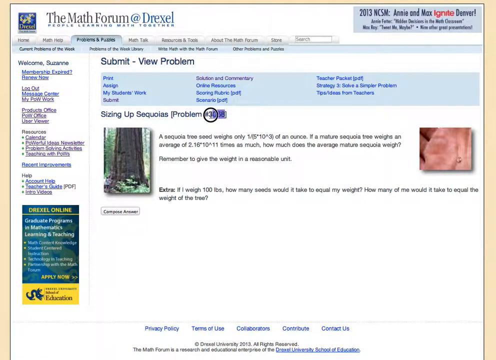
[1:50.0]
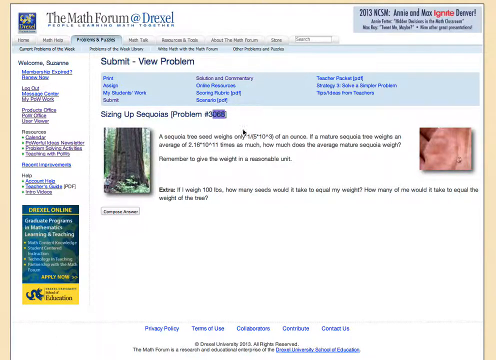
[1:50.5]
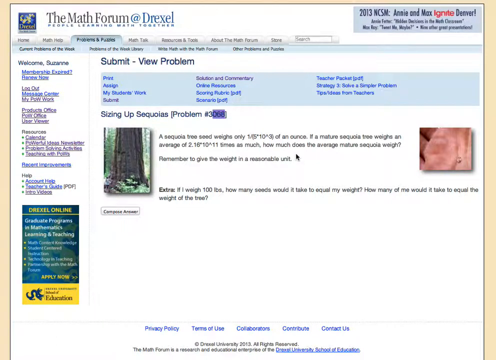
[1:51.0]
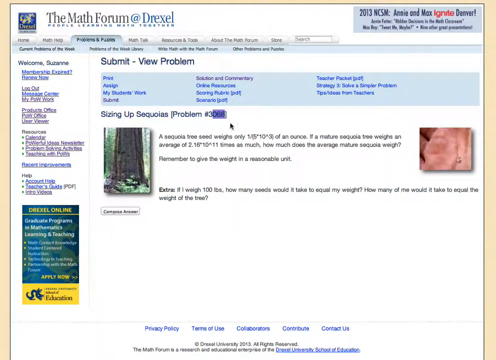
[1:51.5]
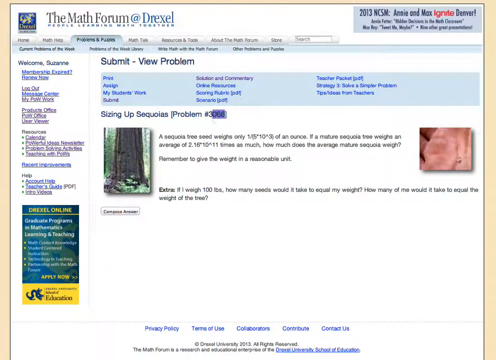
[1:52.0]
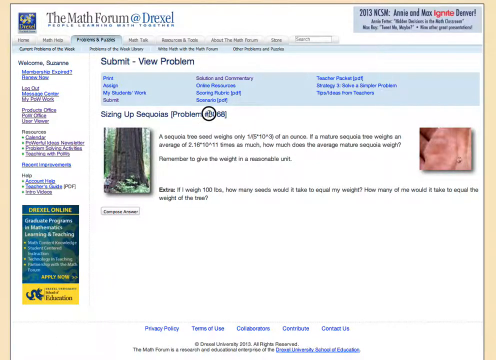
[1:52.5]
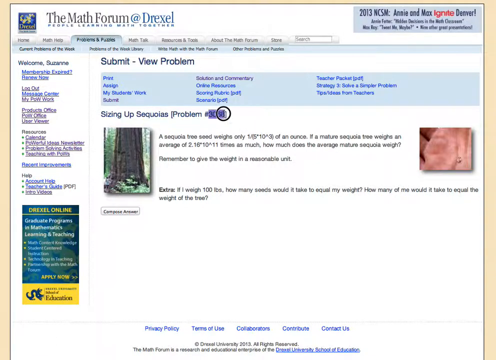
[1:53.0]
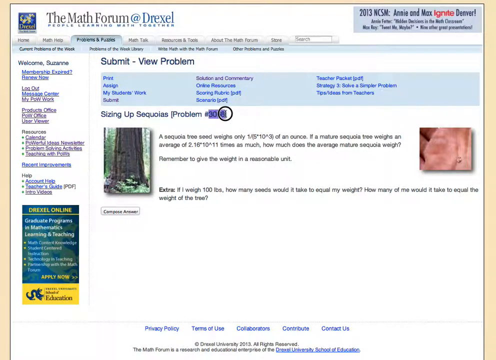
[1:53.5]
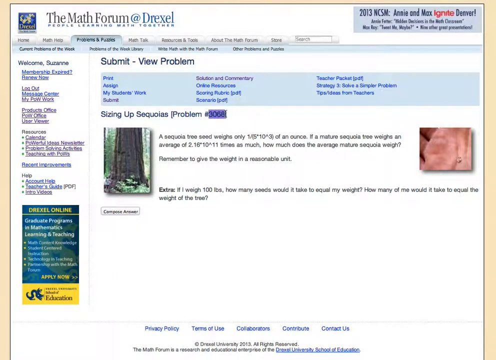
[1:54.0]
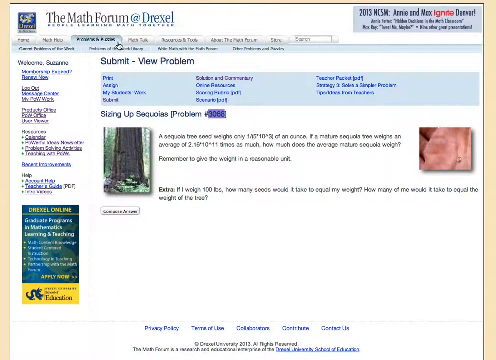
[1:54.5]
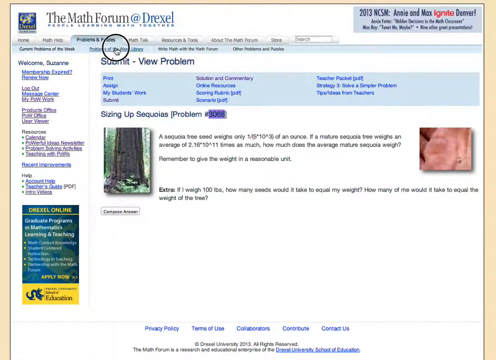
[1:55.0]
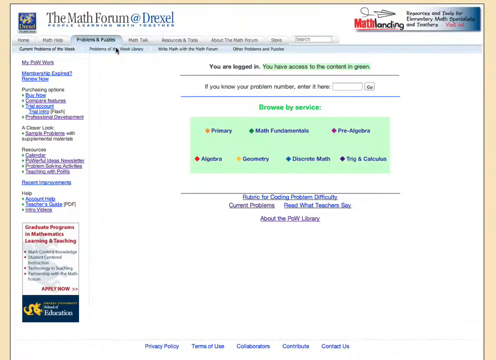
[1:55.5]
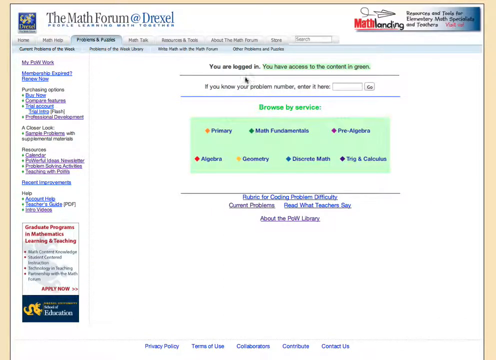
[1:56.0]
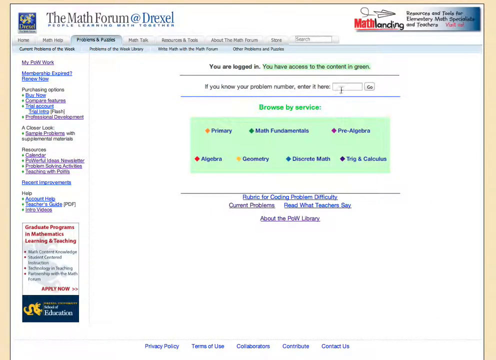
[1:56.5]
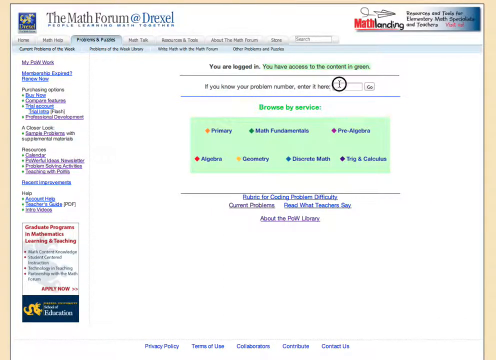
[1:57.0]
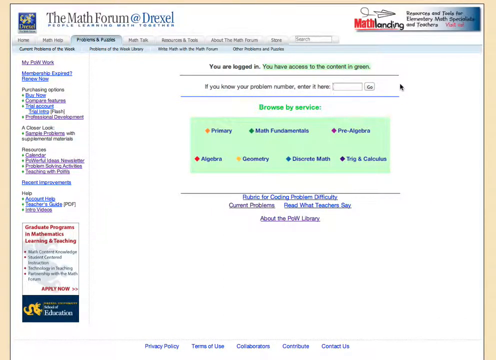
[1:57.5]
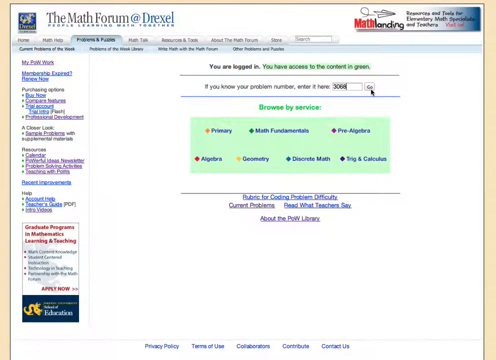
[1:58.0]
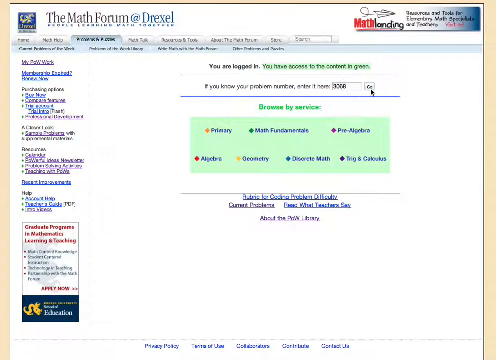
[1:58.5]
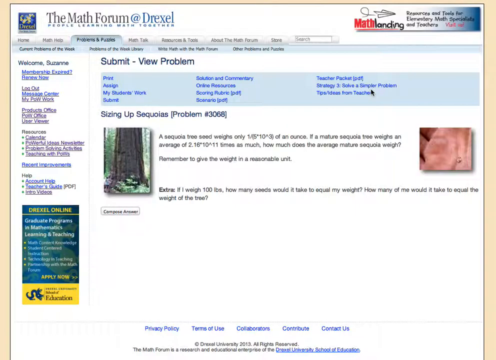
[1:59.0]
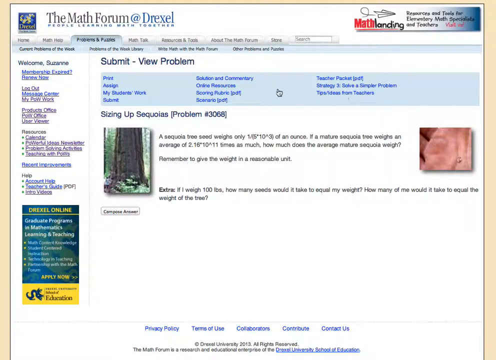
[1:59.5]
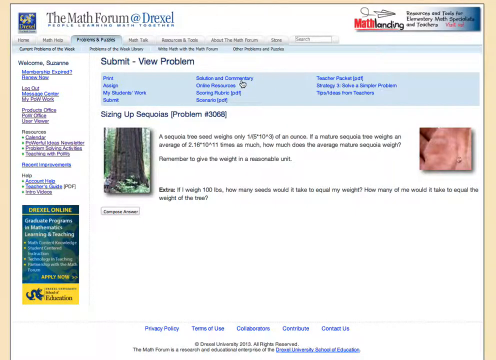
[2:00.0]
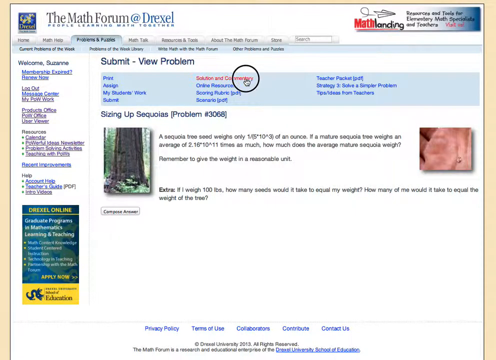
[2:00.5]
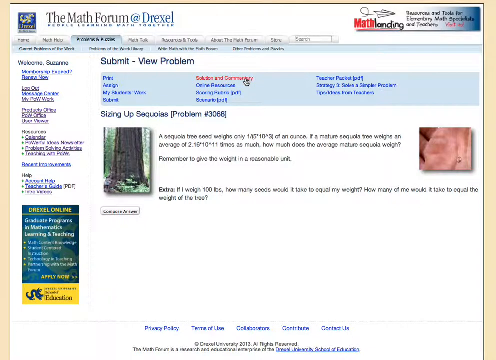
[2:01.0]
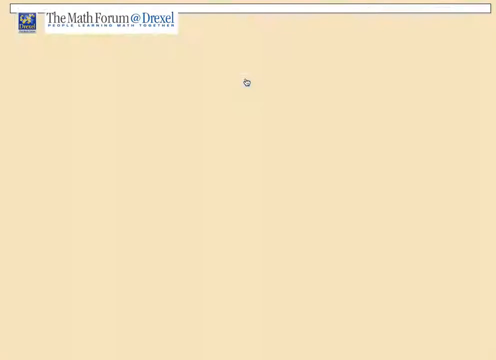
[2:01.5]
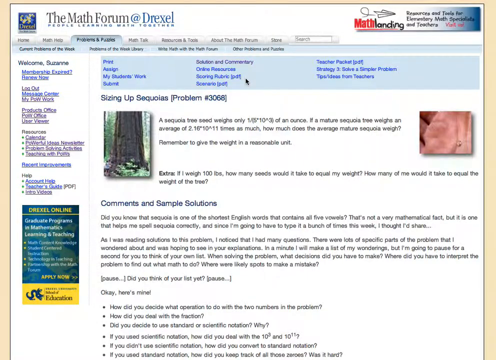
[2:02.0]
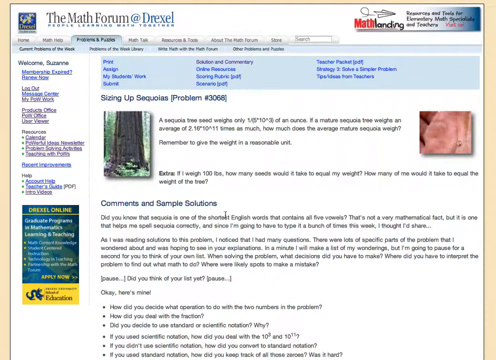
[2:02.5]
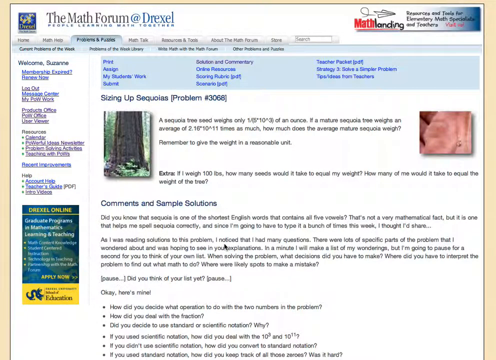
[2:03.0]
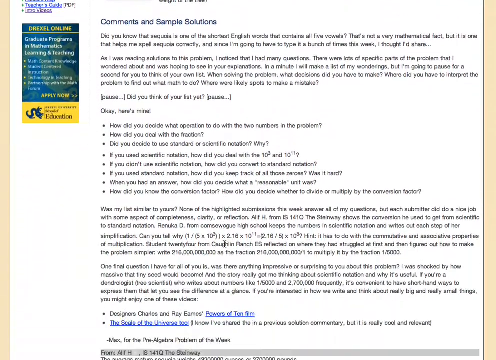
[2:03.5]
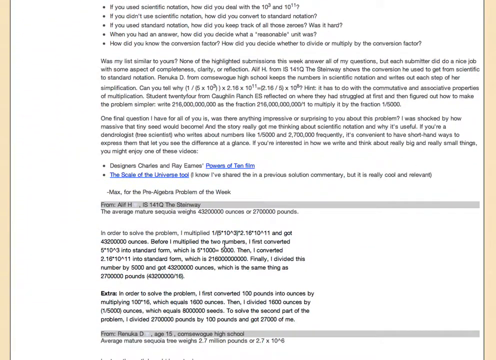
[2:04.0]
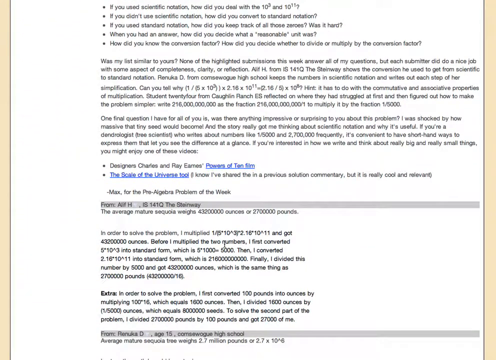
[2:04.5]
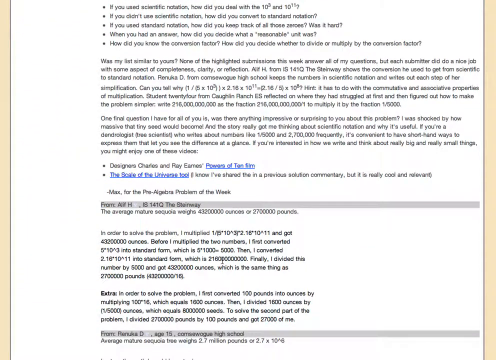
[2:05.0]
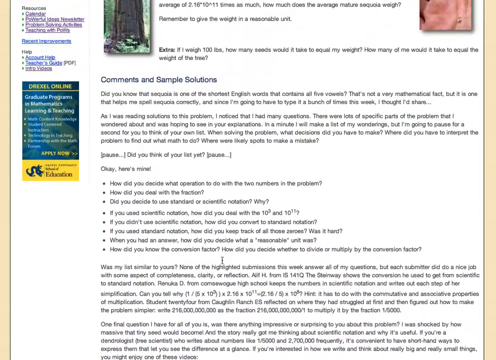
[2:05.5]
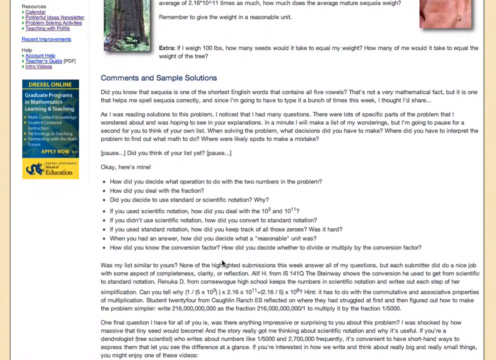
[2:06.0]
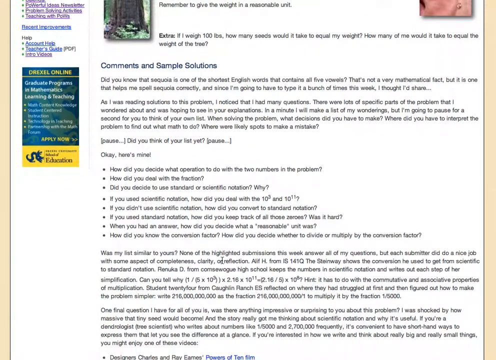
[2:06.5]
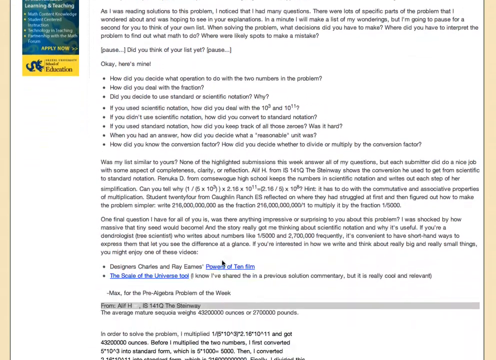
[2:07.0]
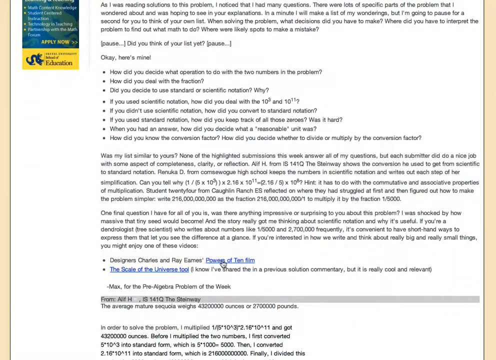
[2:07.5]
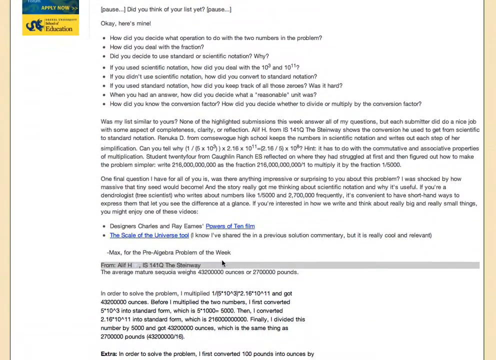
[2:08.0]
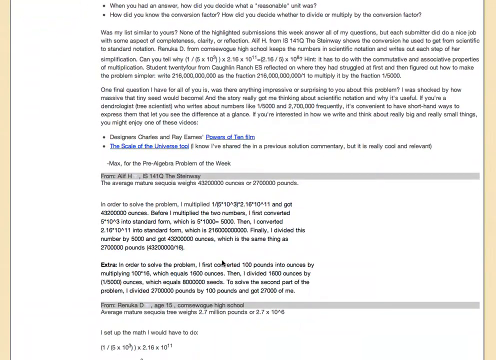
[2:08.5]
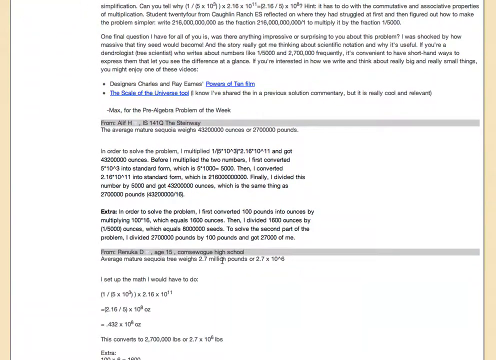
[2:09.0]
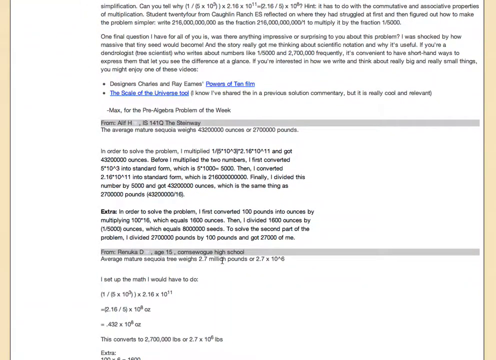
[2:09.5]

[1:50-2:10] The webpage is shown with very poor resolution, so some things are blurry. At the top left corner it says "the Math Forum at Drexel, people learning math together," and in the top right corner of the screen it says "2013 NCSM, Annie and Max Ignite Denver." Below that text area is a tab menu; from left to right the tabs say "Home," "Math Help," "Problems and Puzzles," apparently "Math Talk," apparently "Resources and Tools," apparently "About the Math Forum," and "Store," with a search bar to the right of that. Below that area, the text says "Submit View Problem," then what appears to be "sizing up Sequoias problem number 3068"; a black circle around the number makes it hard to see completely. In the bottom left corner is a vertically aligned rectangle colored blue, green and yellow that says "Drexel Online Graduate Programs in Mathematics, Learning, and Teaching."